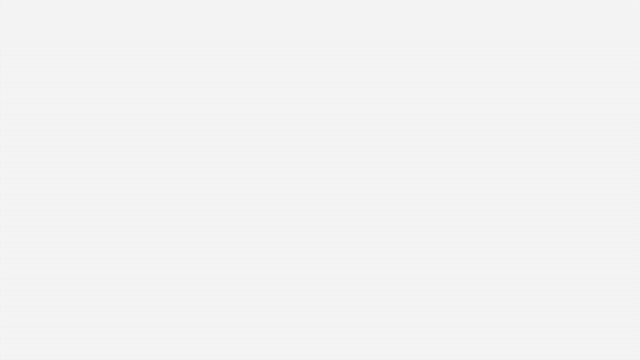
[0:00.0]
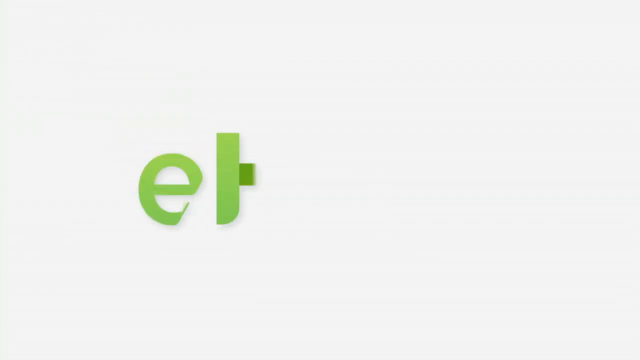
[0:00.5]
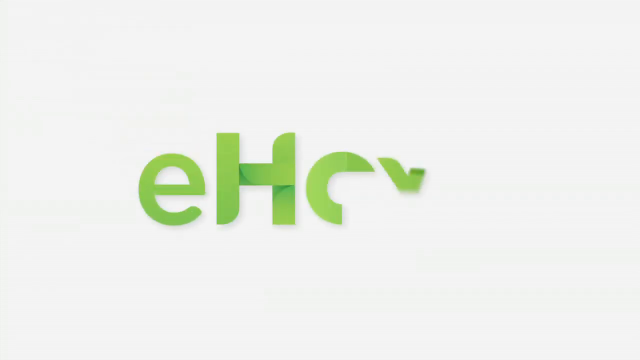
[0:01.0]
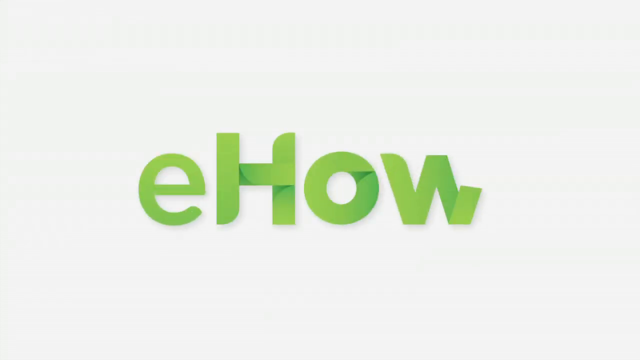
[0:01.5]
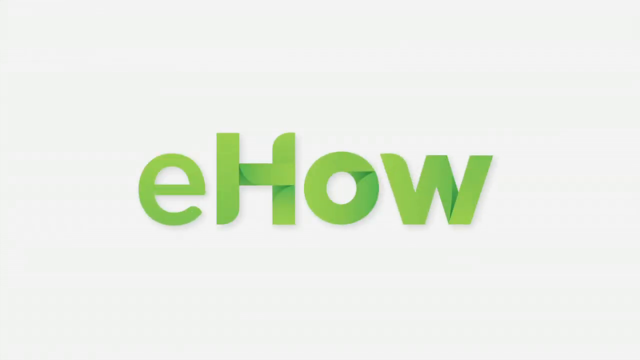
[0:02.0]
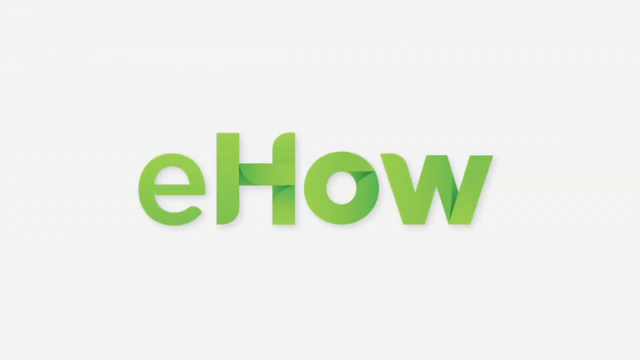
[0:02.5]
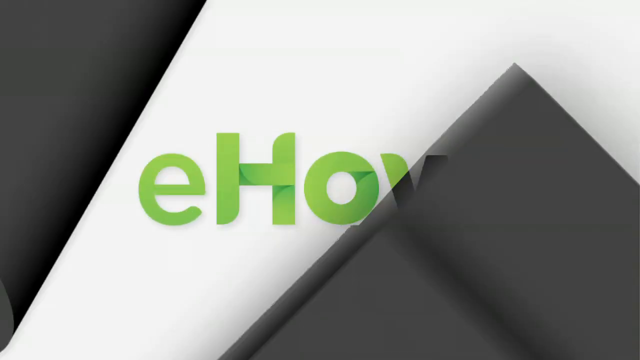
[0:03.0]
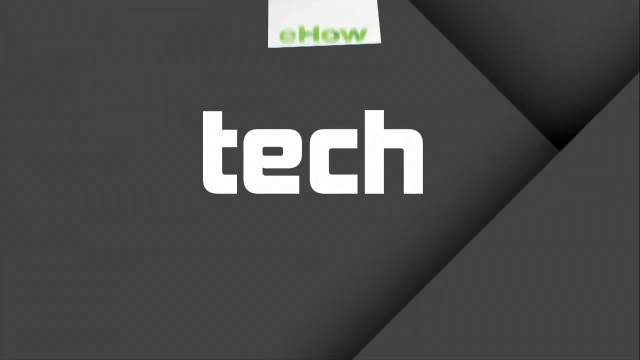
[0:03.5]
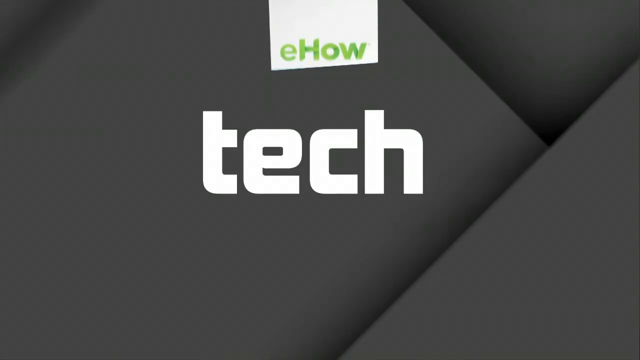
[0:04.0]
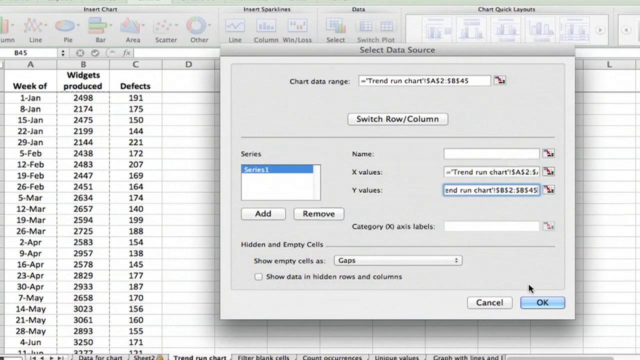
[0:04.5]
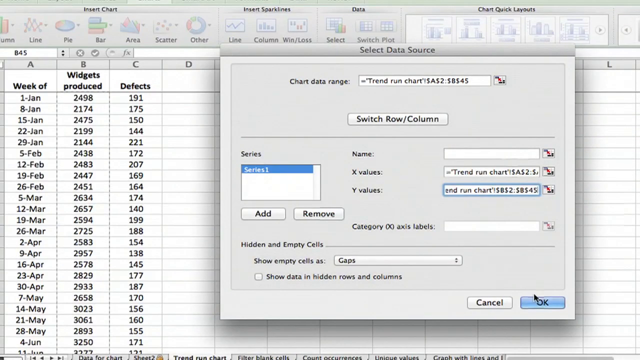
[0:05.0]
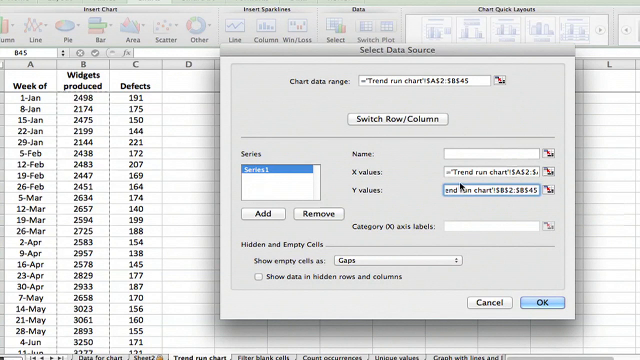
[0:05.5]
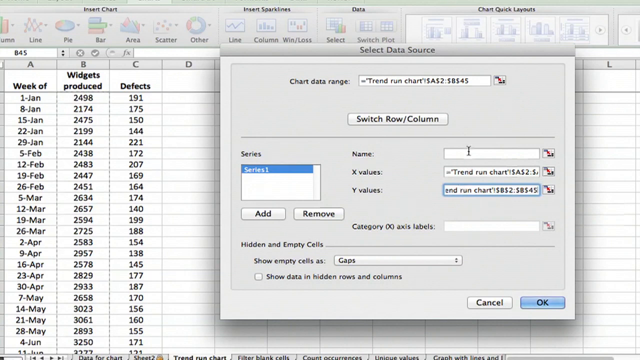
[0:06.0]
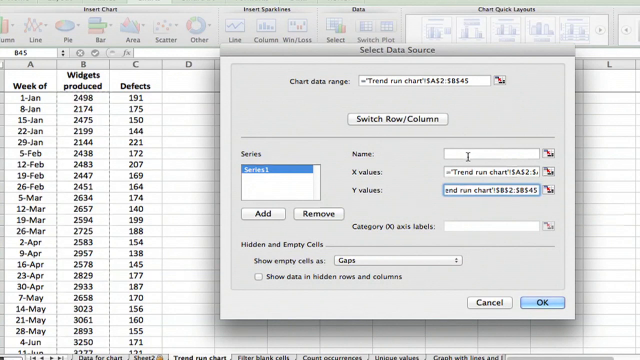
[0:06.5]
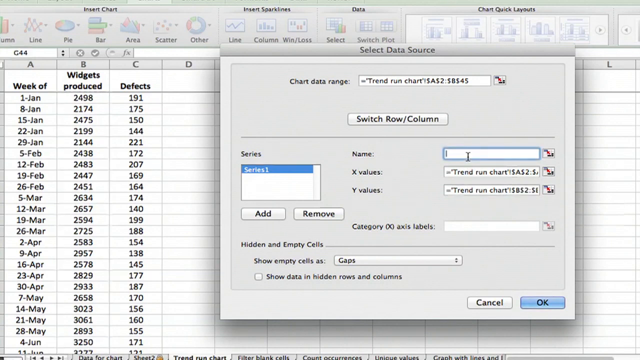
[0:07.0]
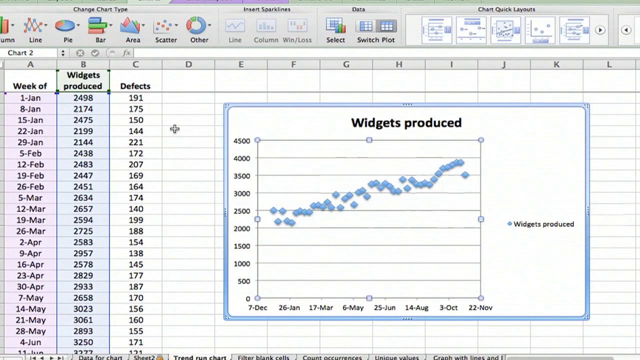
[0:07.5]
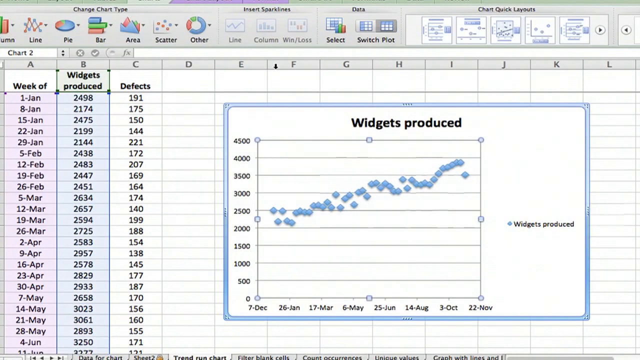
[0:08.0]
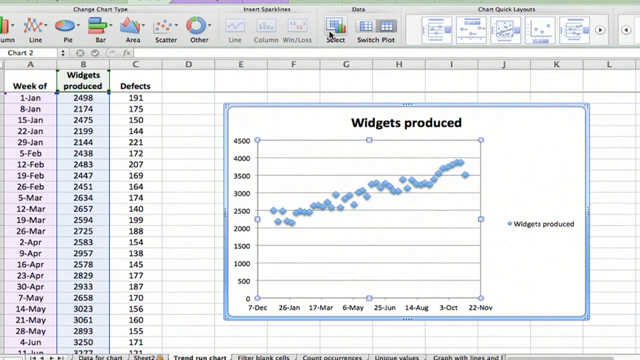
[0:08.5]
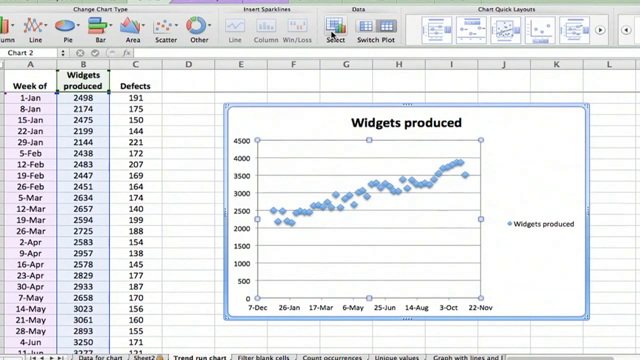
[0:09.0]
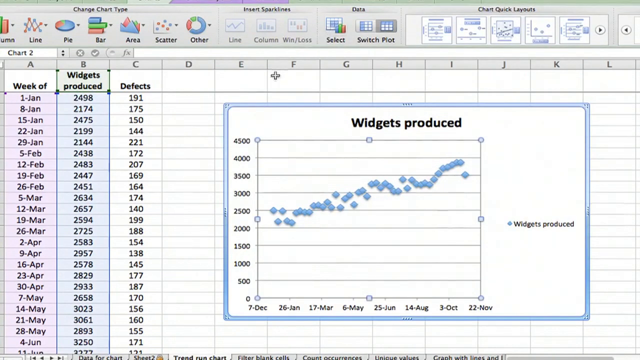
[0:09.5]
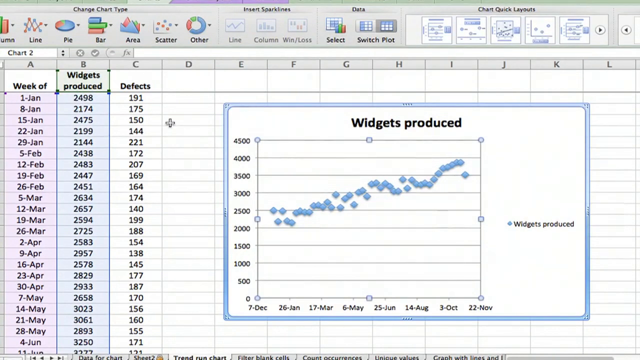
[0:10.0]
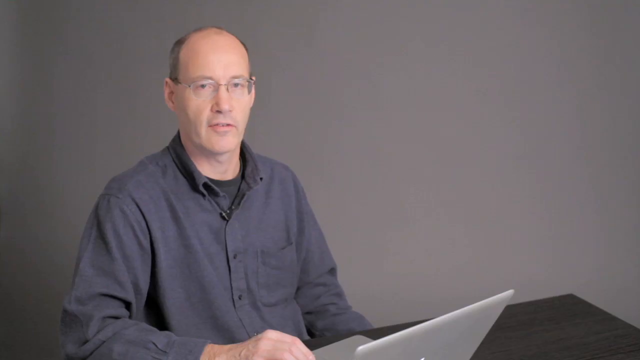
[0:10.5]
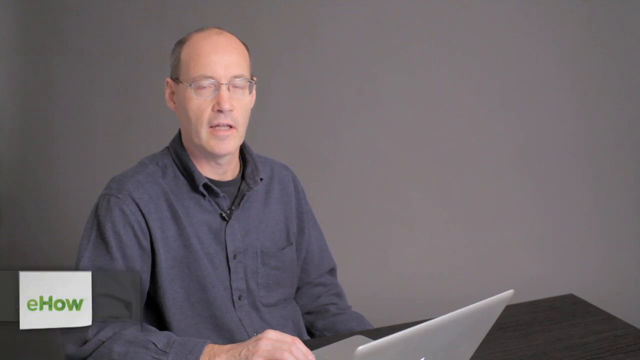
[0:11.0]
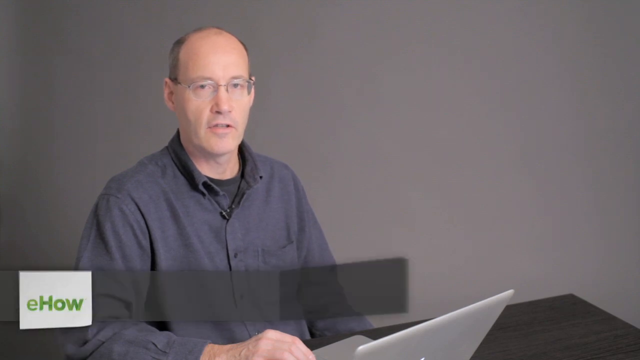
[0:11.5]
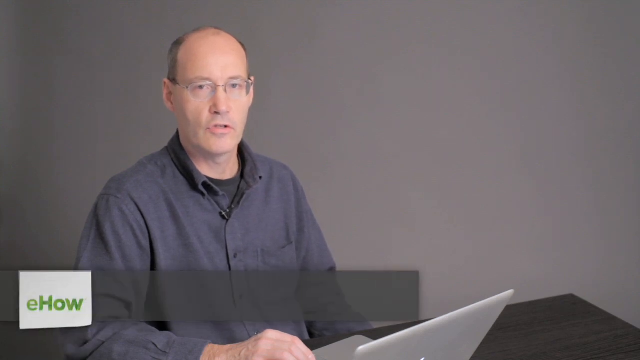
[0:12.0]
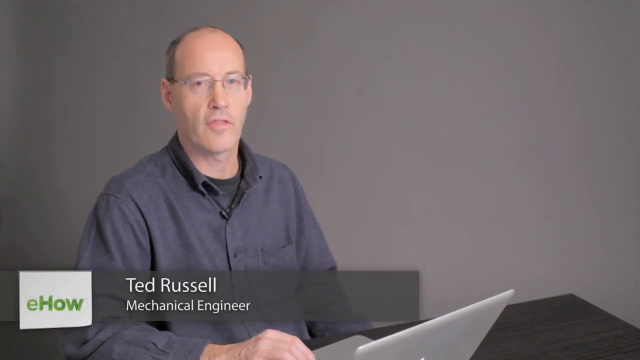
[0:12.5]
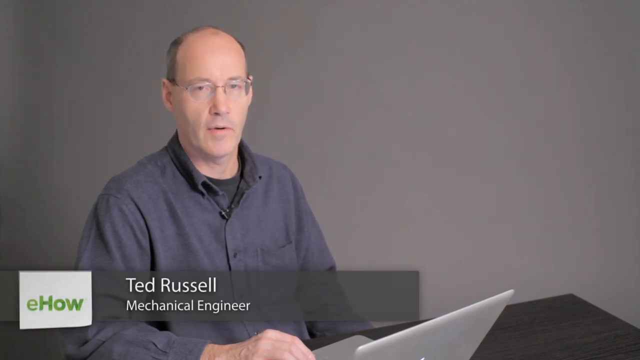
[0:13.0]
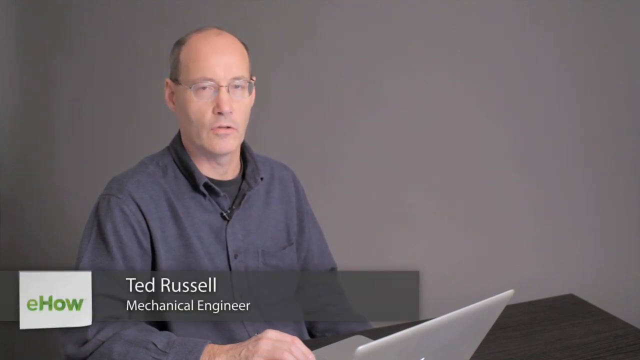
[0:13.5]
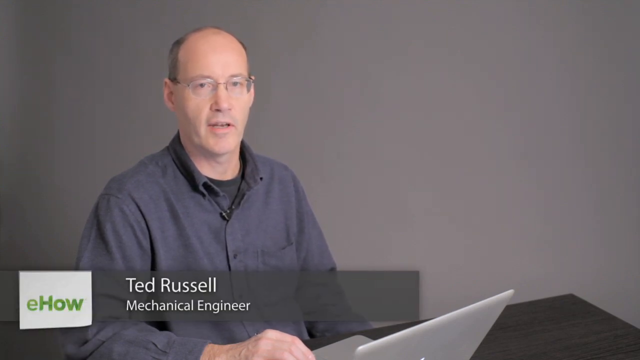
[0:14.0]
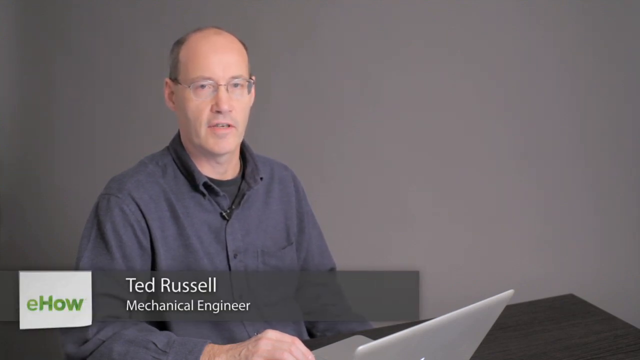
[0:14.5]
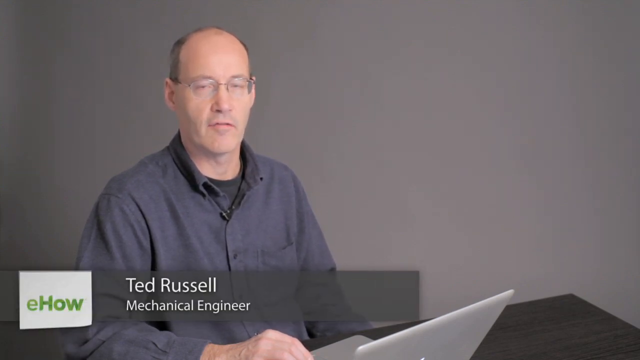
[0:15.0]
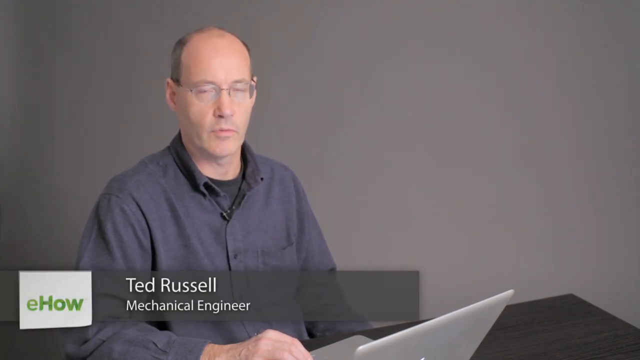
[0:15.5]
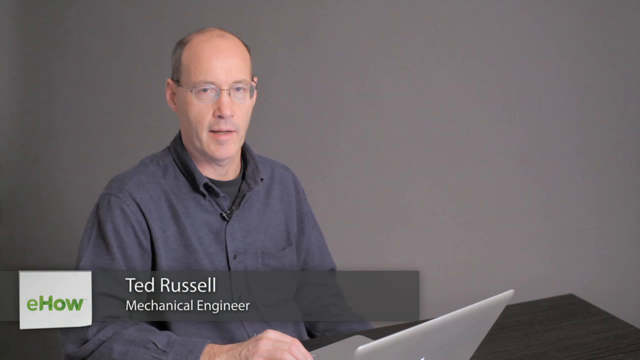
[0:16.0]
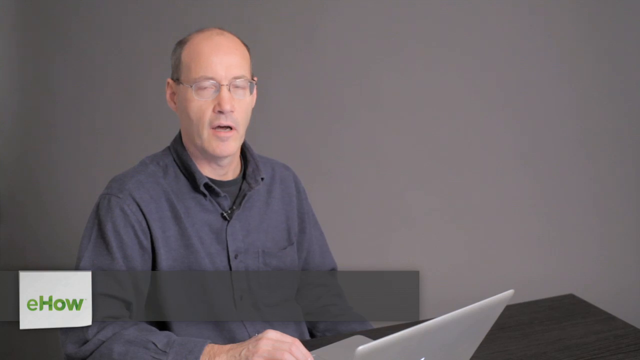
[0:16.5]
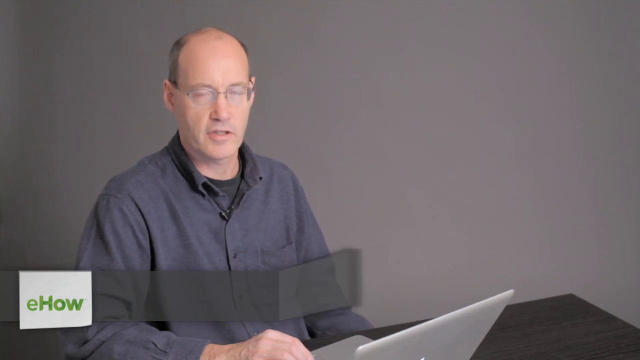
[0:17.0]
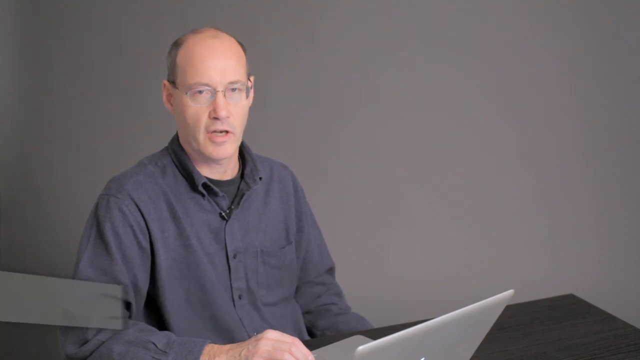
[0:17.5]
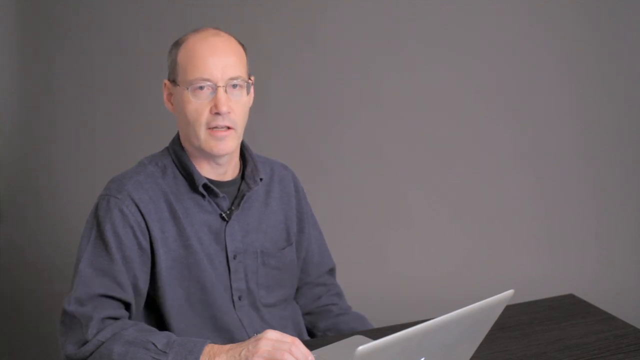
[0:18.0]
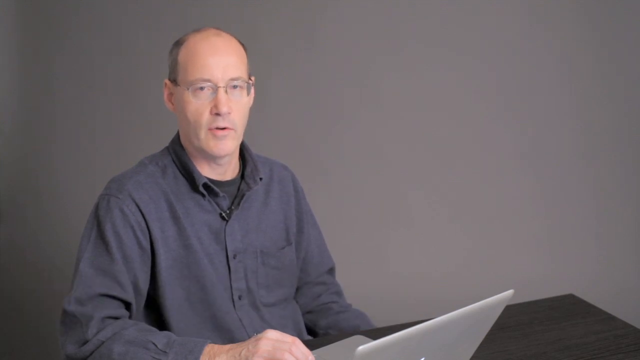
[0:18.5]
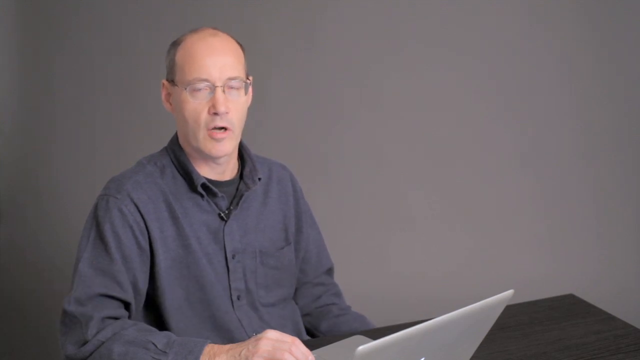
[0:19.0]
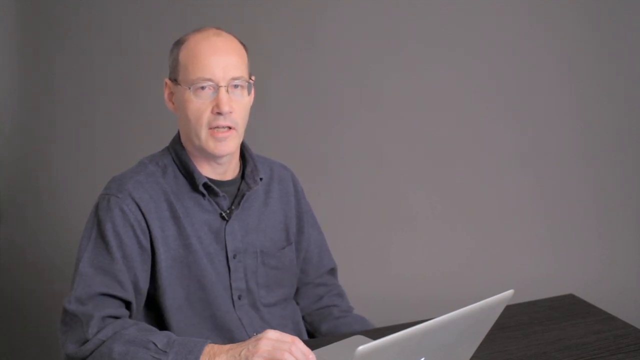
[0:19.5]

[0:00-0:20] The video opens on a cream-colored background, where the letters lowercase e, uppercase H, lowercase o and lowercase w form in the center of the screen. The letters are green with some darker green texture, as if they had been folded from paper. Several black sheets then converge to form a black background, with a white tab in the center of the top bearing the same e, h, o, w letters. In the center is the word "tech" in white, in a different font from the ehow lettering. The screen then focuses on an Excel document with three columns: "week of", "widgets produced" and "defects". Actions in the spreadsheet attempt to chart a data range, and a chart appears on the right of the screen. After that, a person is on screen, seated at a table. A banner for eHow at the bottom left gives his name, Ted Russell, with the subtitle "Mechanical Engineer". He is in a three-quarters pose with his back to the left and is mostly on the left side of the screen. He wears glasses and a gray long-sleeved button-up shirt and has a receding hairline. His right arm is on the table, mostly obscured by the bottom of the video, and his hand rests on an open laptop, which is also half obscured by the bottom of the frame. He is speaking.